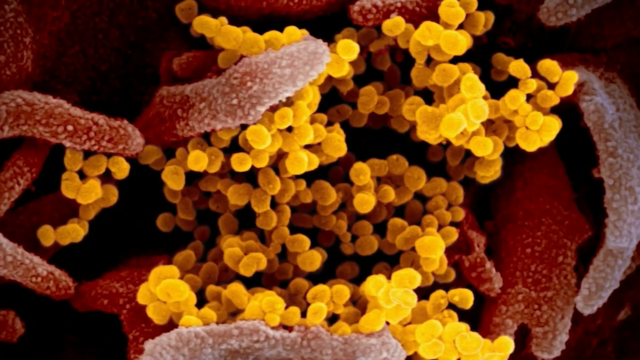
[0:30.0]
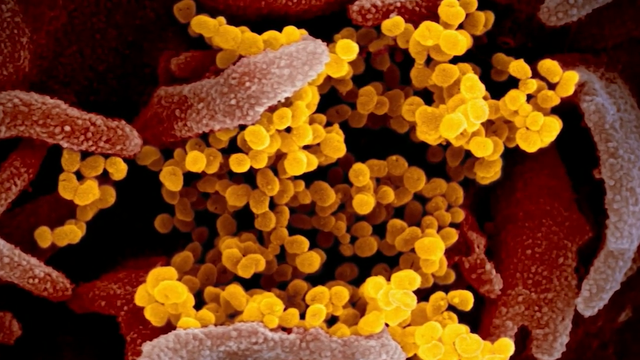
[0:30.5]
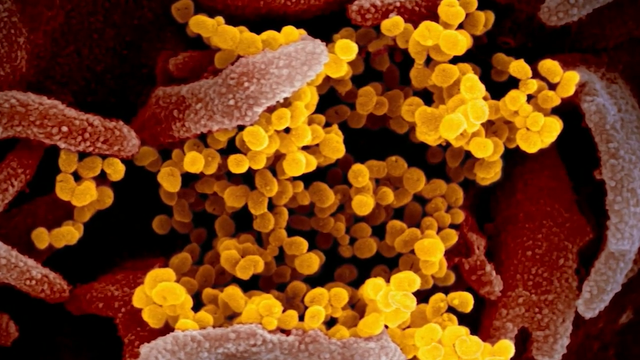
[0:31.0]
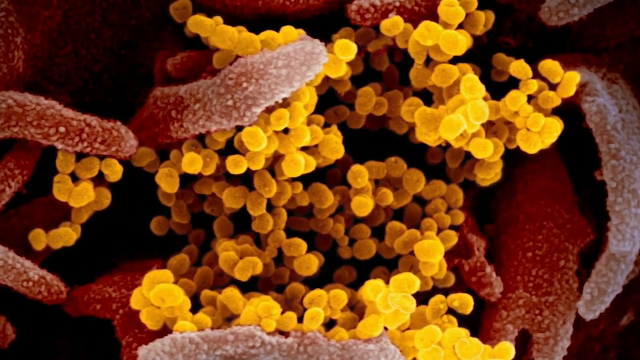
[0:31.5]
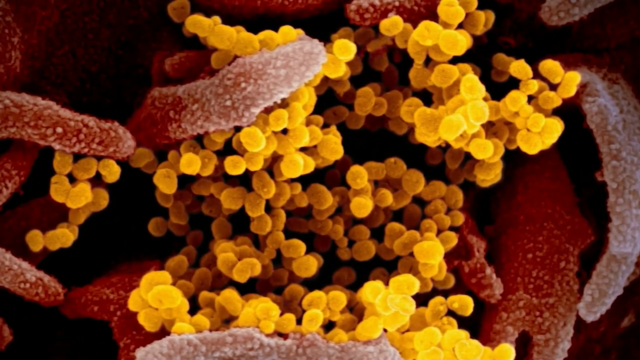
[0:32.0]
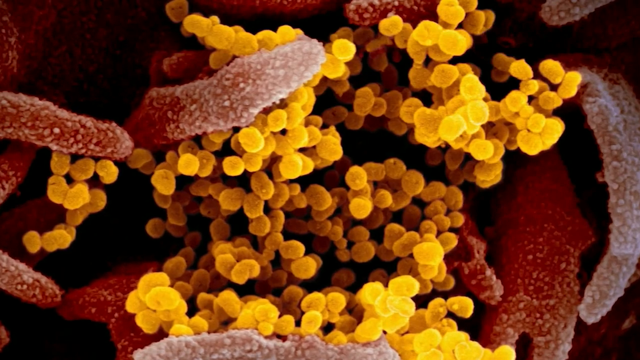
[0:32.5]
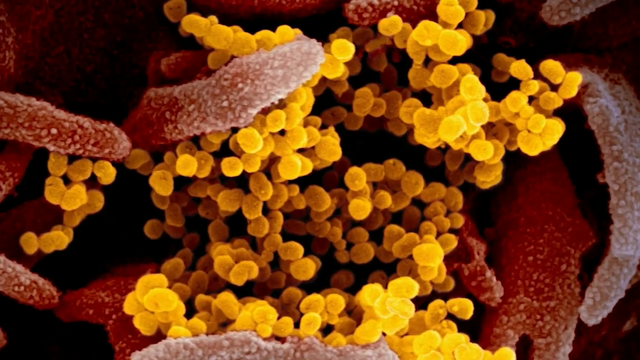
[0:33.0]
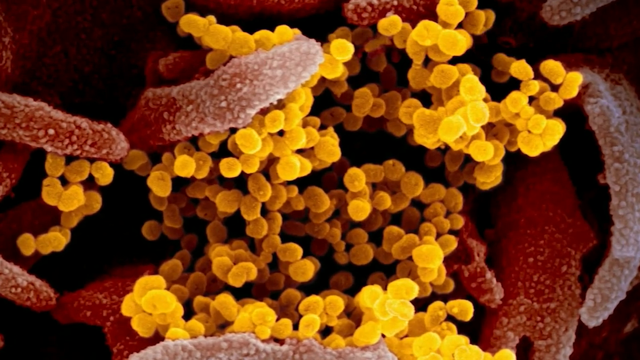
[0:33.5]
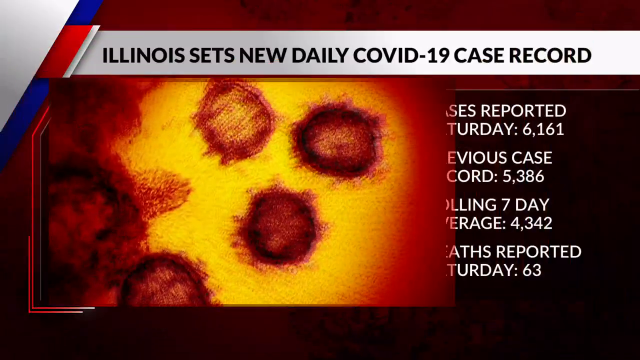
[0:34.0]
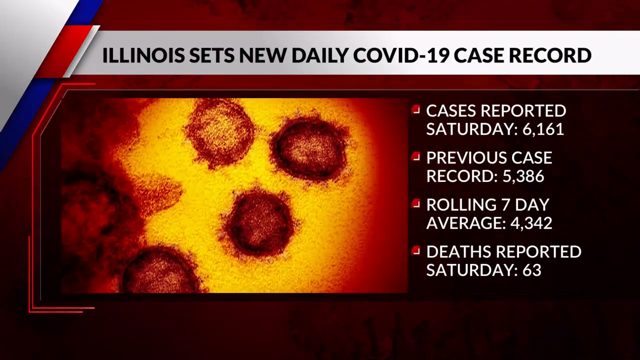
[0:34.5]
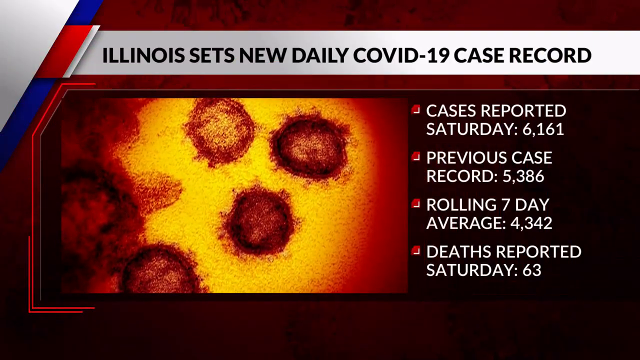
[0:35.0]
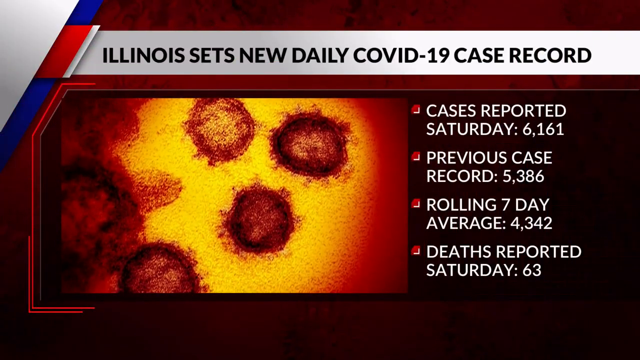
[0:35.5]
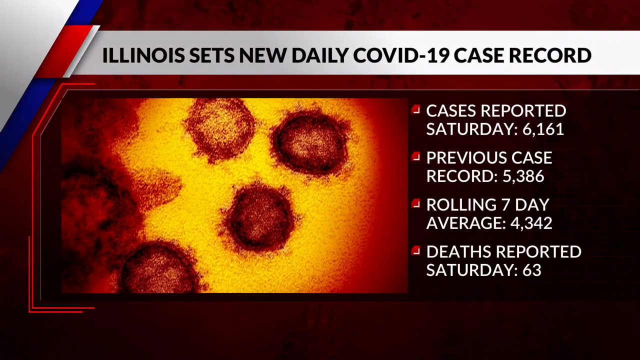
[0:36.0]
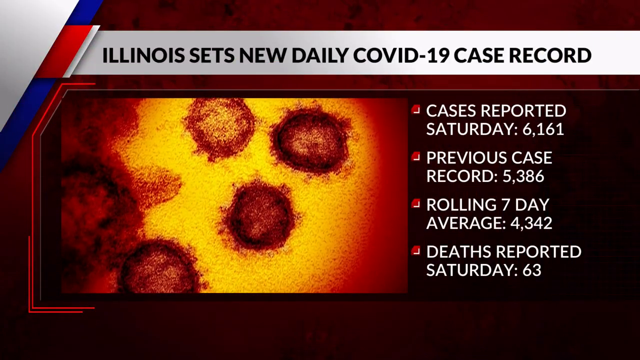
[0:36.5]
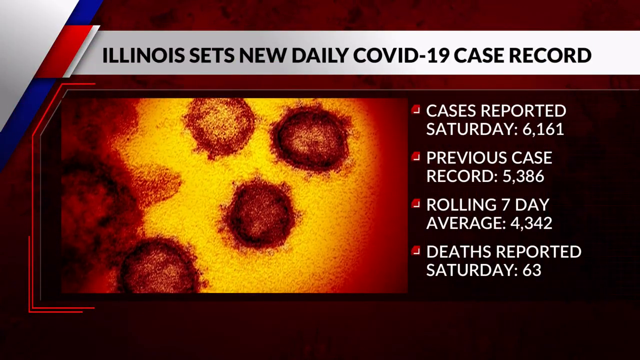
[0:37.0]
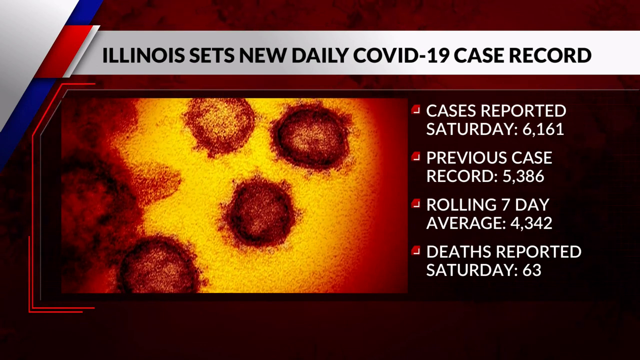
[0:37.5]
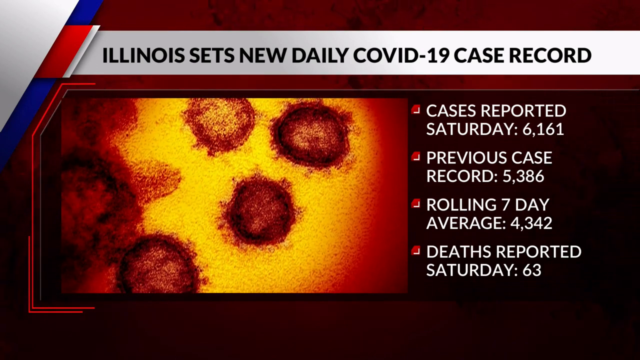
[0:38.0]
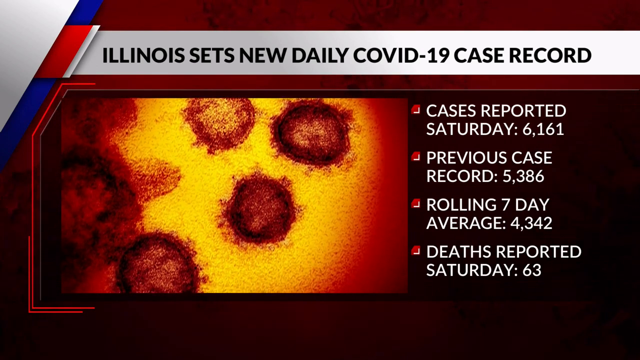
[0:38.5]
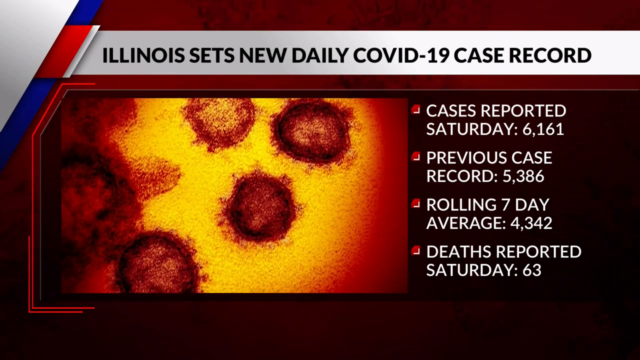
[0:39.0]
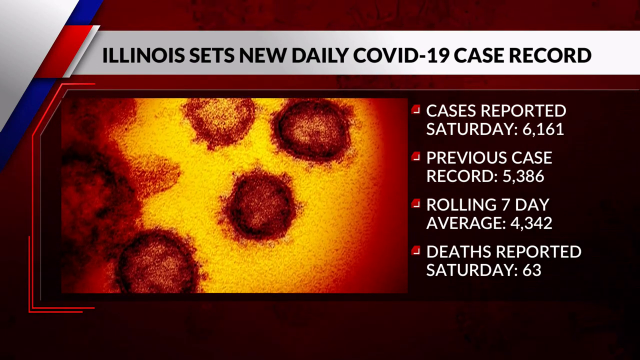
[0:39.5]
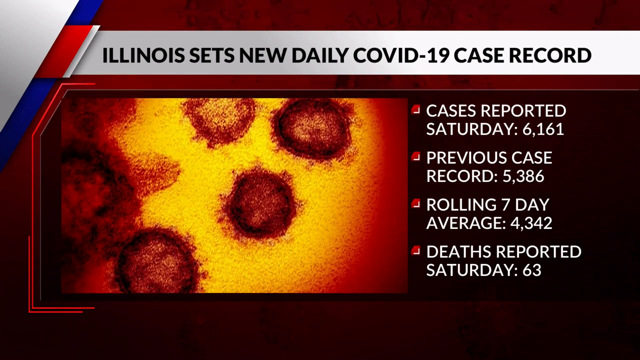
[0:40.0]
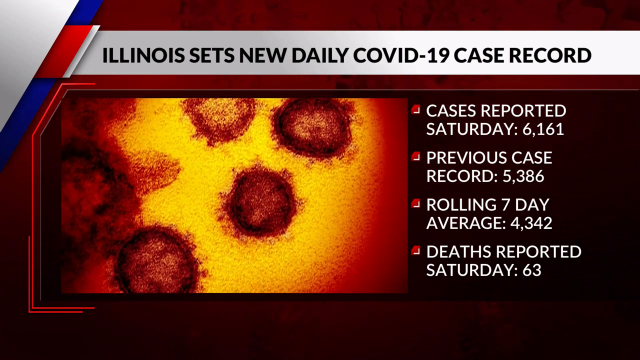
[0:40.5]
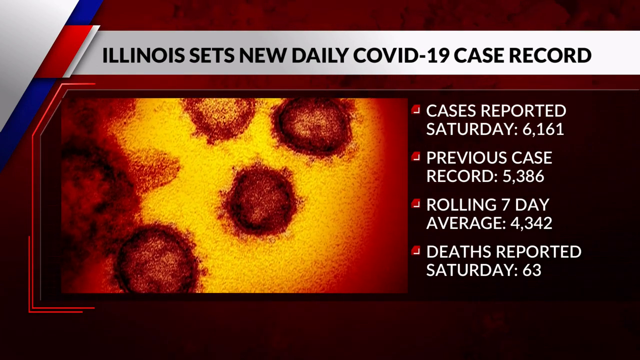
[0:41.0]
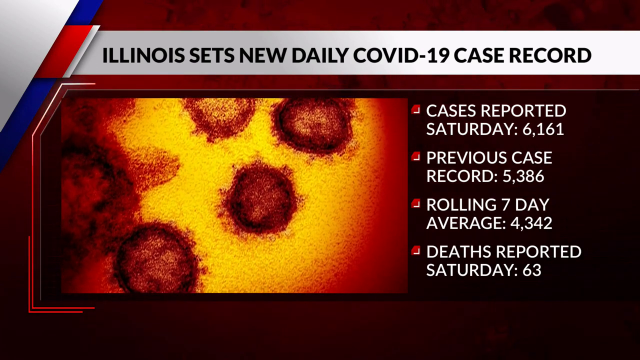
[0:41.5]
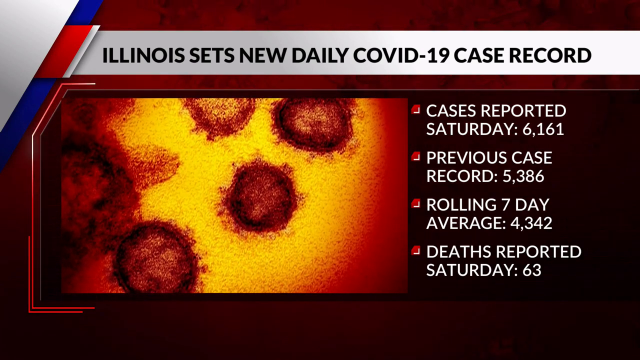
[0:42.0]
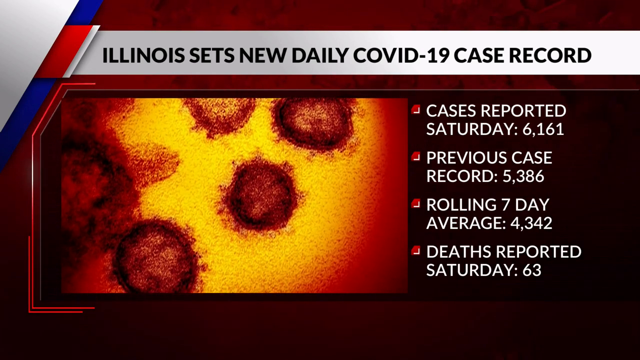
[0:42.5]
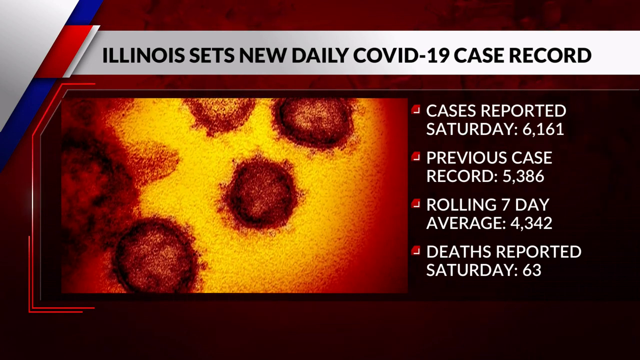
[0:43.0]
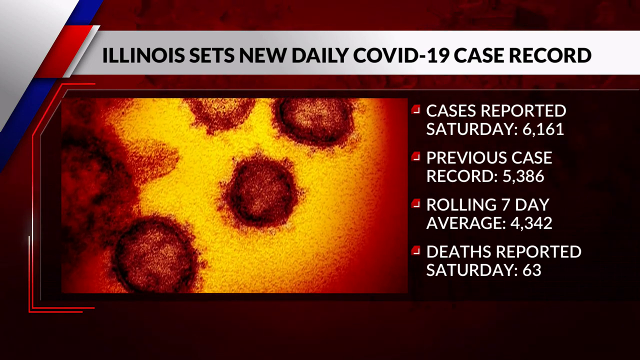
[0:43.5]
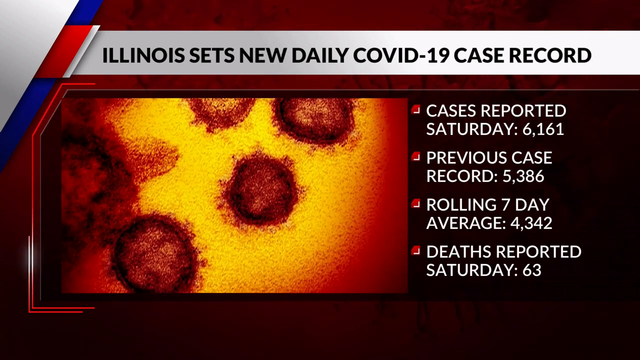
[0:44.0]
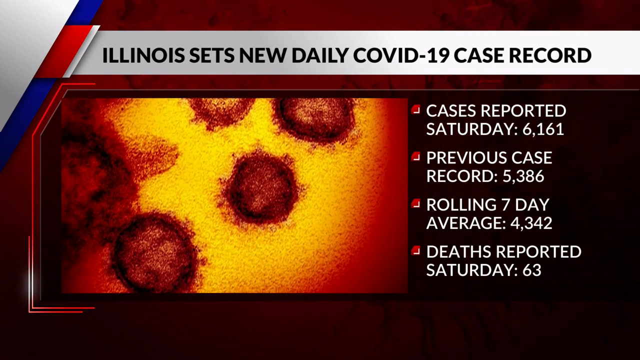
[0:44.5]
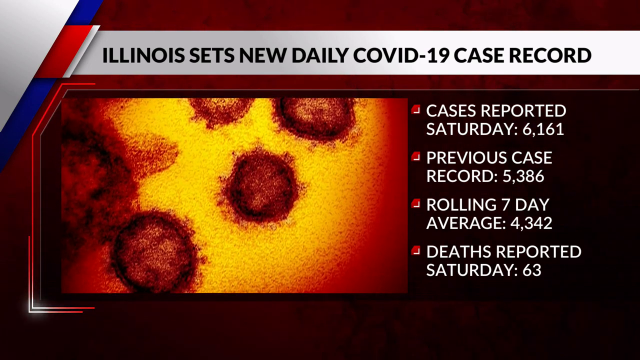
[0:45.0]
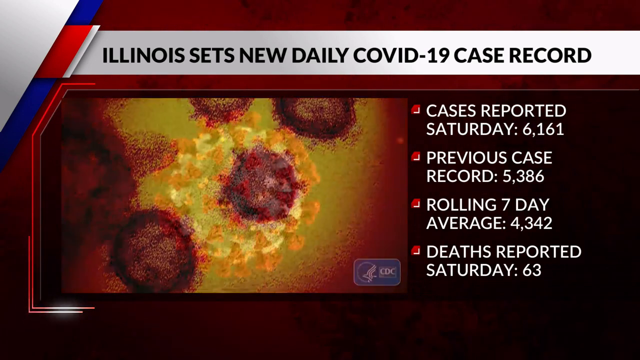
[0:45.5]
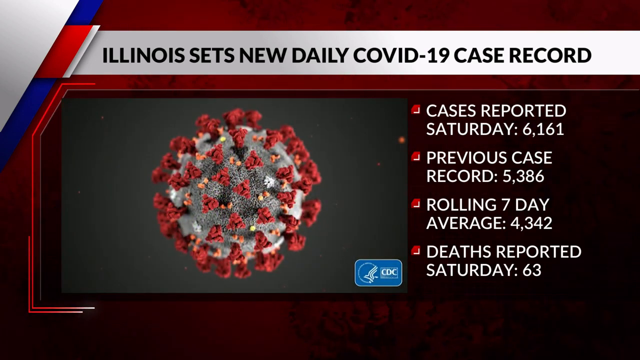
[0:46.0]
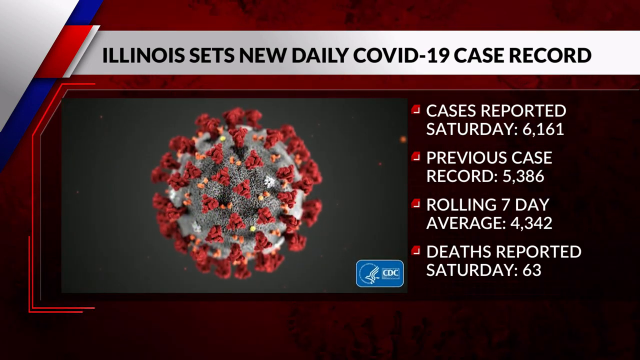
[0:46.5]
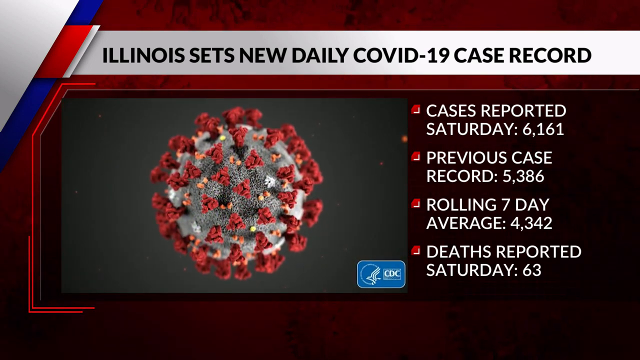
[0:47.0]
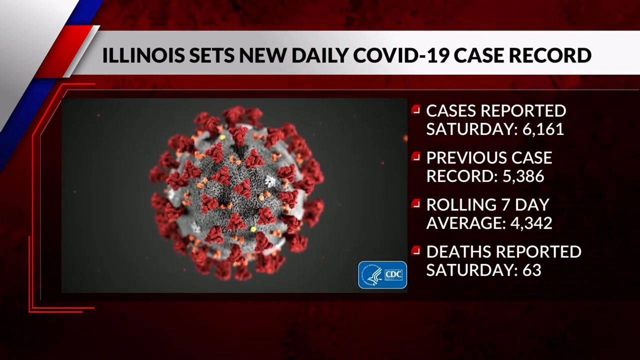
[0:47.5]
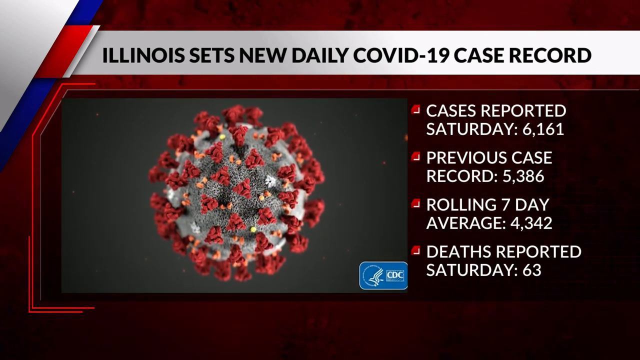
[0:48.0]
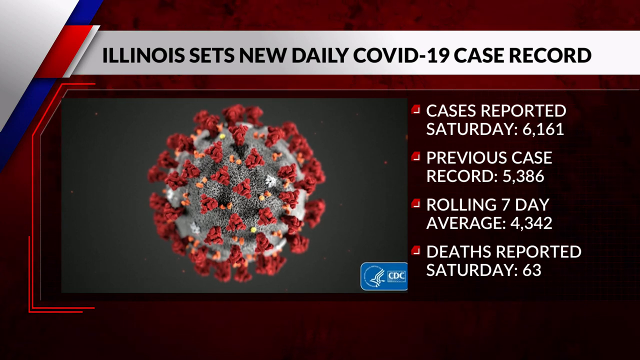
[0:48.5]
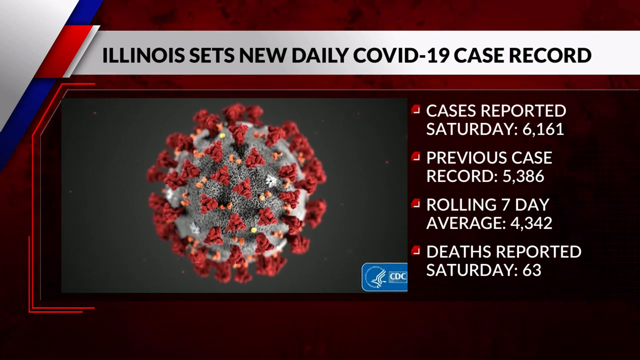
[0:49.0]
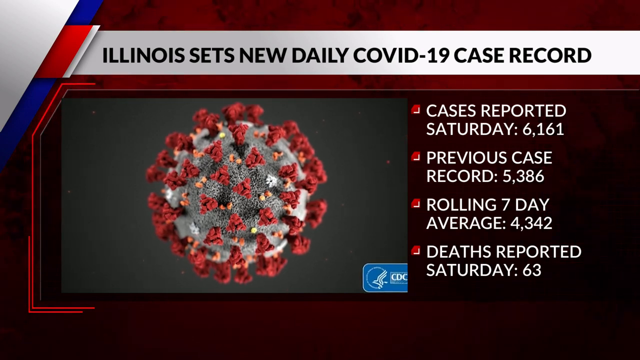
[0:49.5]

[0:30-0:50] What appears to be a red bacterium has yellow, circular particles in the middle, possibly a new virus. A second page follows with the caption "Illinois sets a new daily COVID-19 case record". The page is orange and yellow with red circular images that could symbolize blood clots. On the right side are four bullet points: cases reported Saturday at 6161, previously reported cases at 5386, a rolling seven-day average of 4342, and deaths reported Saturday at 63.